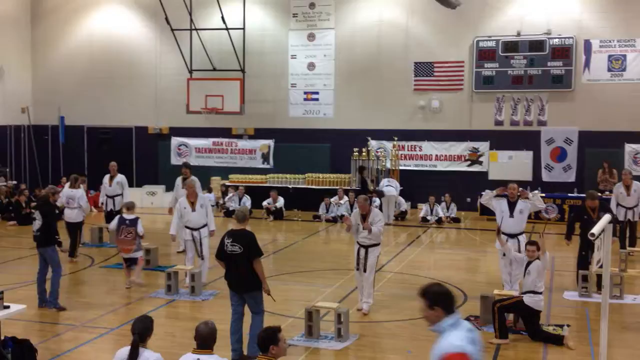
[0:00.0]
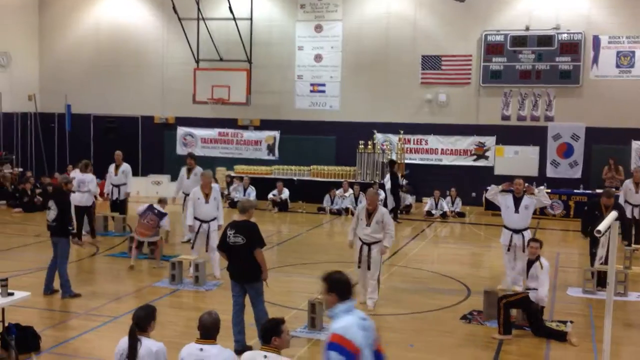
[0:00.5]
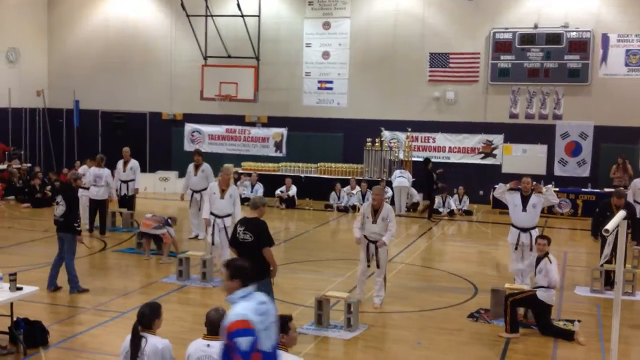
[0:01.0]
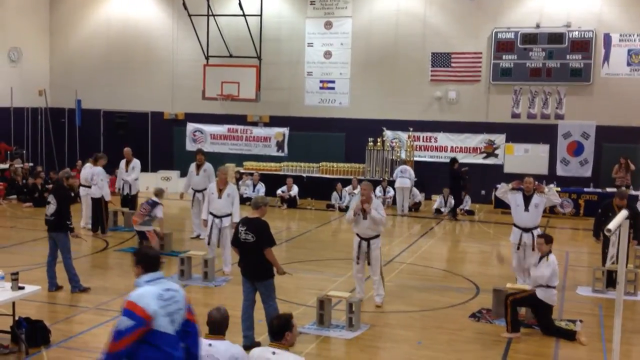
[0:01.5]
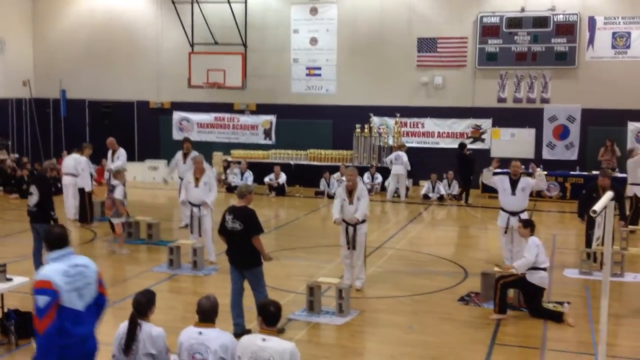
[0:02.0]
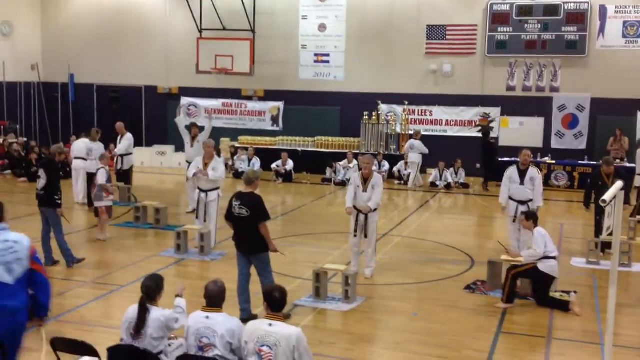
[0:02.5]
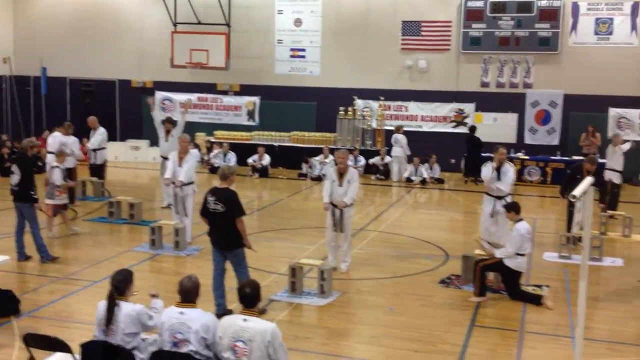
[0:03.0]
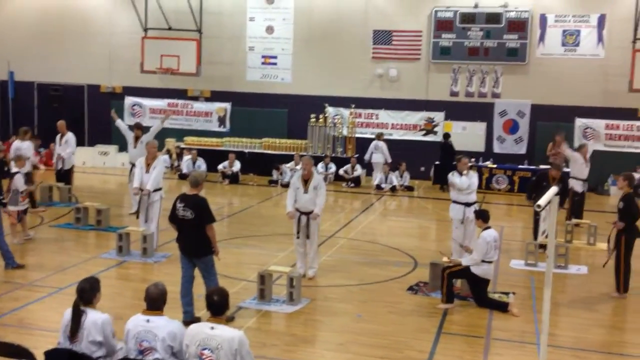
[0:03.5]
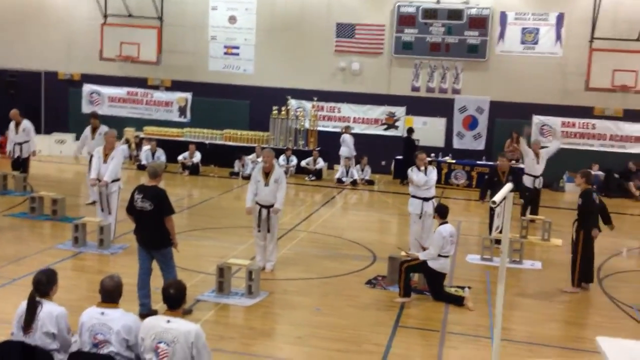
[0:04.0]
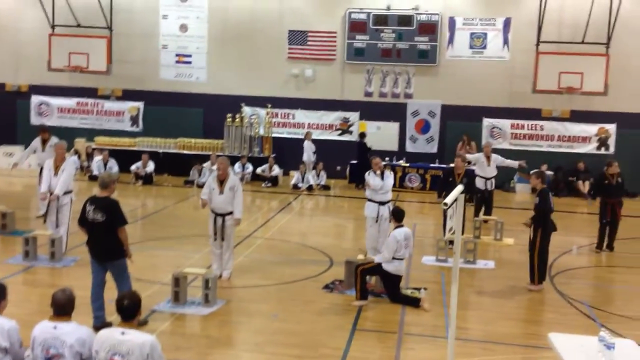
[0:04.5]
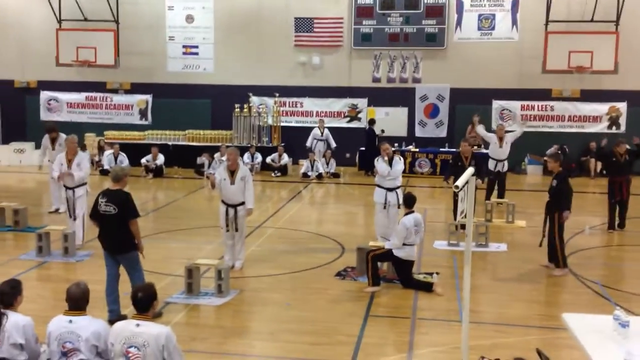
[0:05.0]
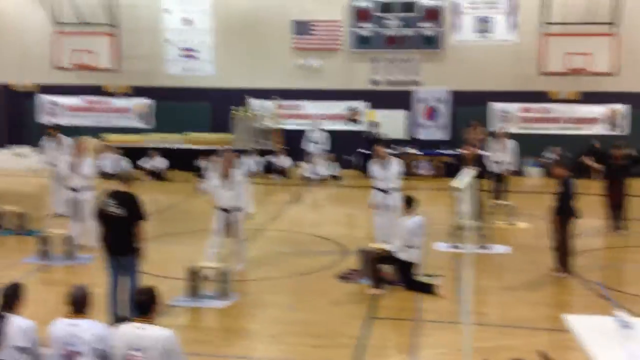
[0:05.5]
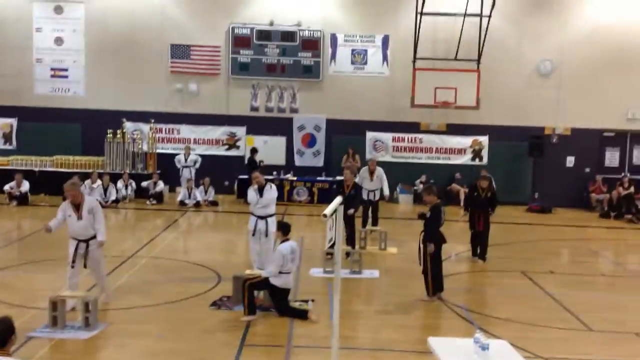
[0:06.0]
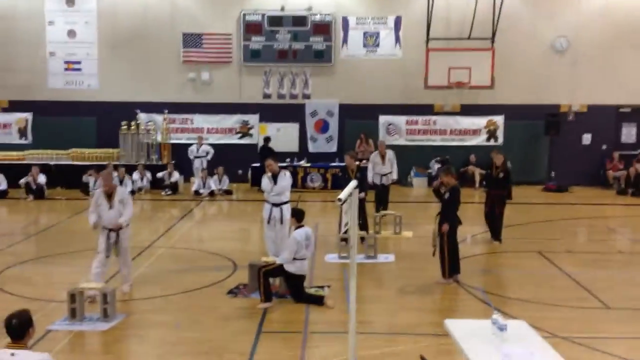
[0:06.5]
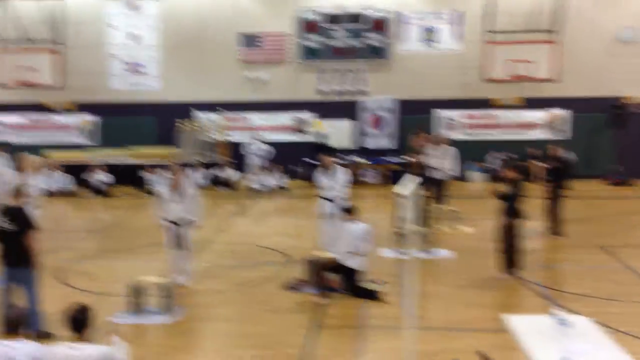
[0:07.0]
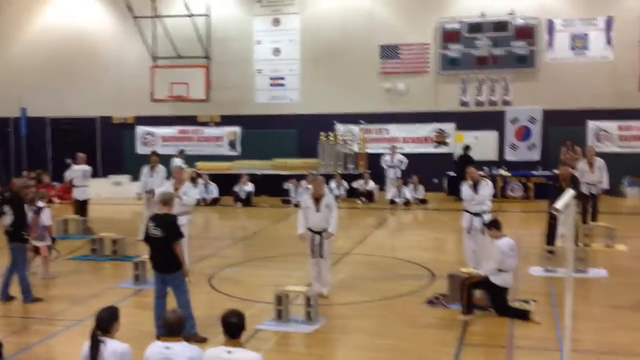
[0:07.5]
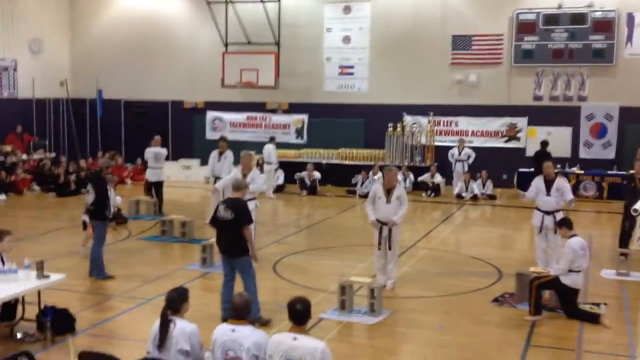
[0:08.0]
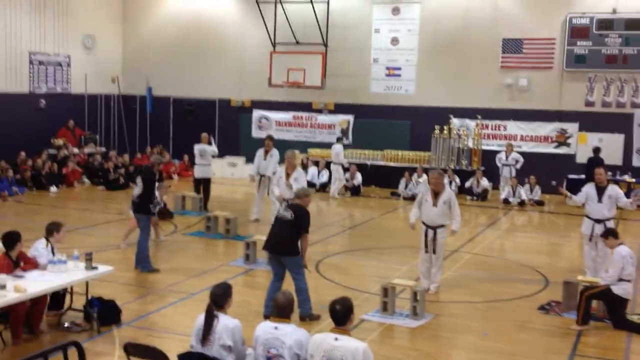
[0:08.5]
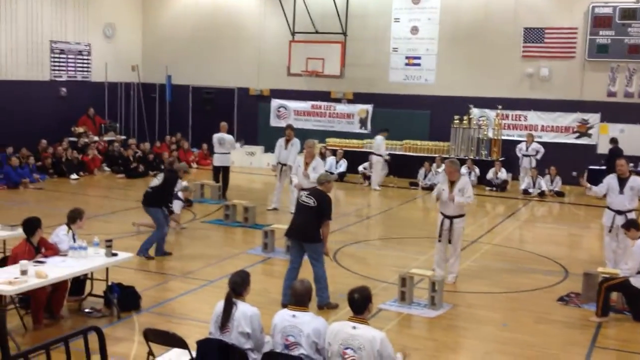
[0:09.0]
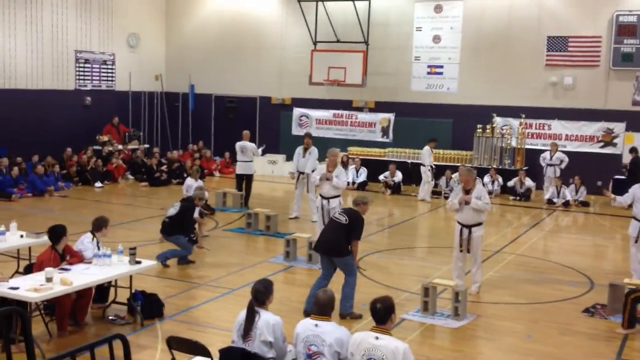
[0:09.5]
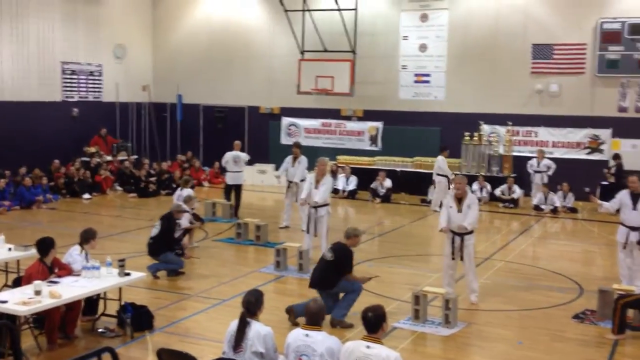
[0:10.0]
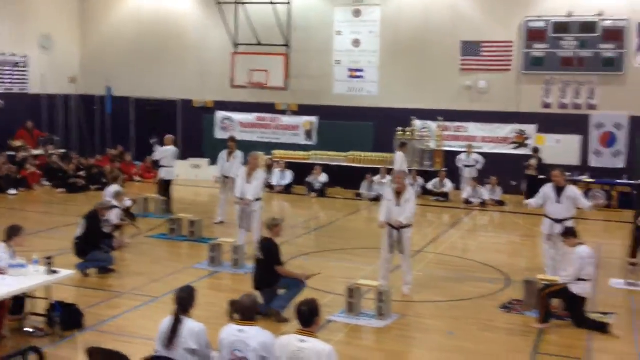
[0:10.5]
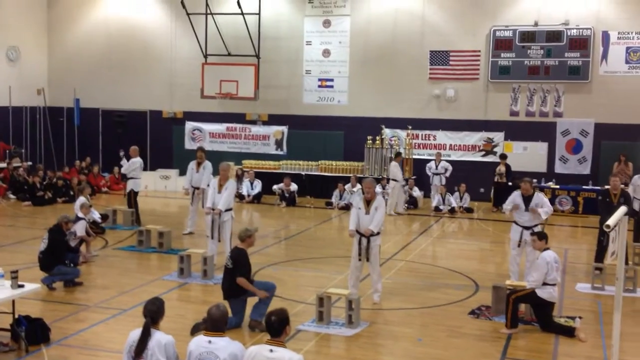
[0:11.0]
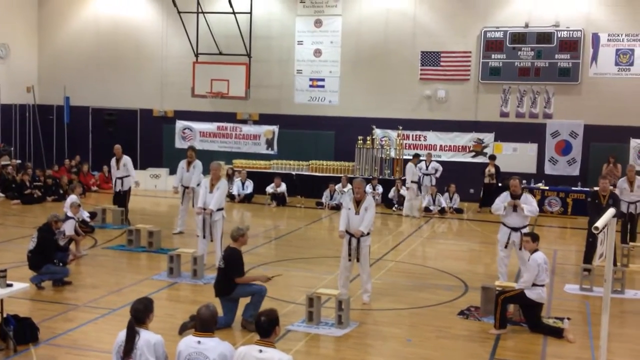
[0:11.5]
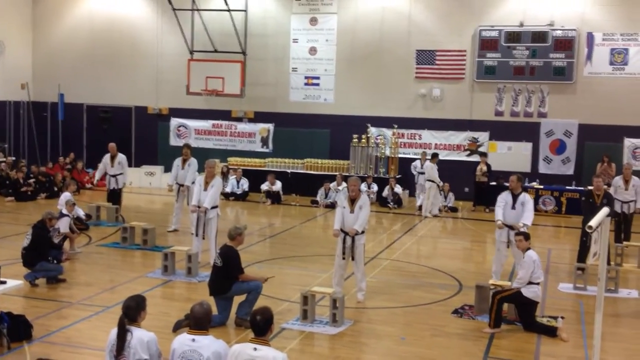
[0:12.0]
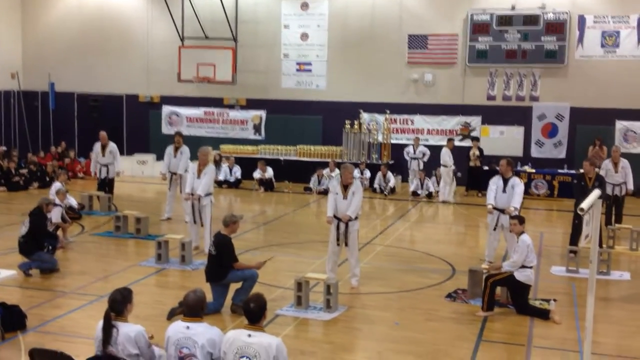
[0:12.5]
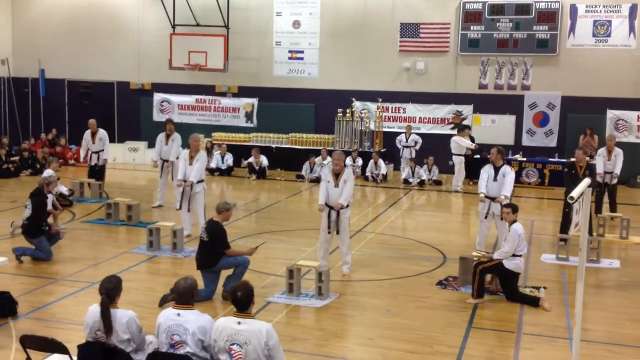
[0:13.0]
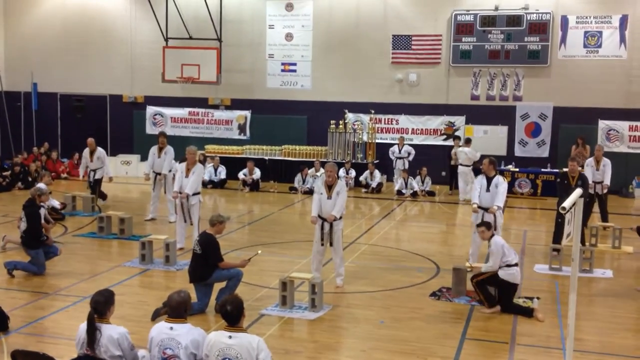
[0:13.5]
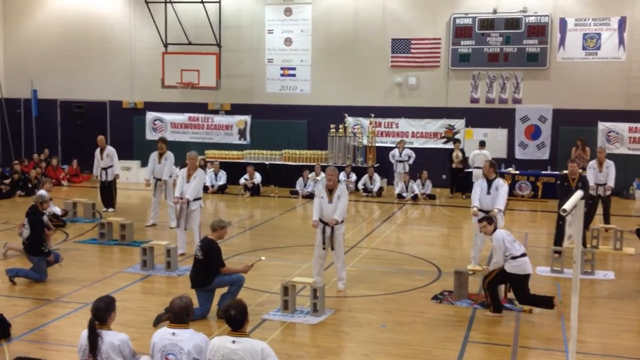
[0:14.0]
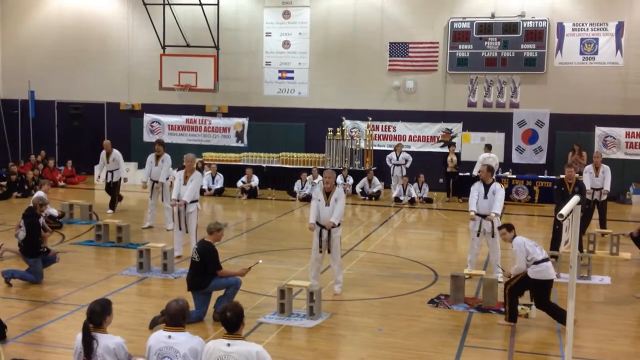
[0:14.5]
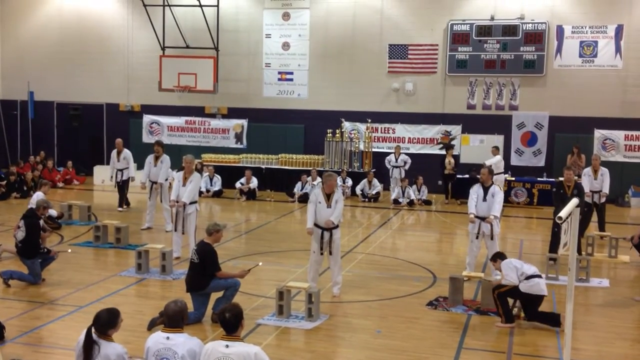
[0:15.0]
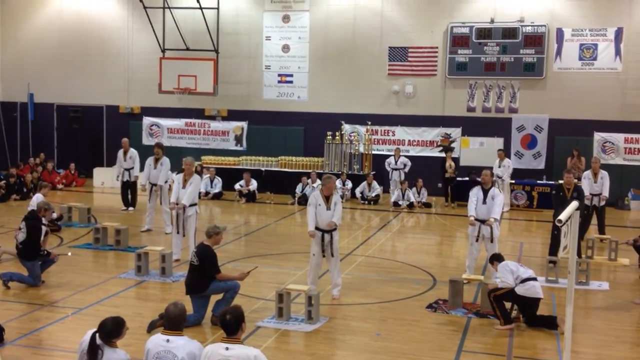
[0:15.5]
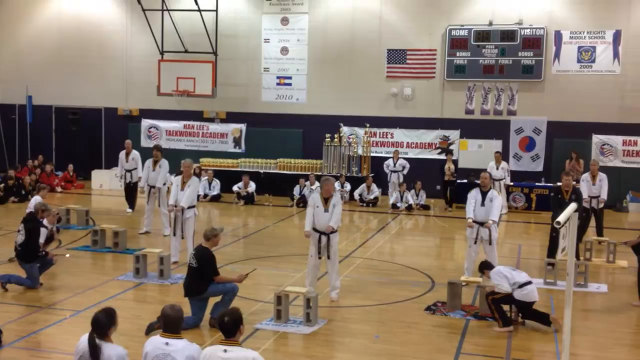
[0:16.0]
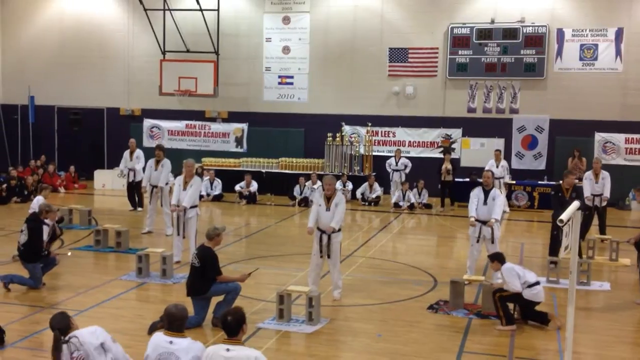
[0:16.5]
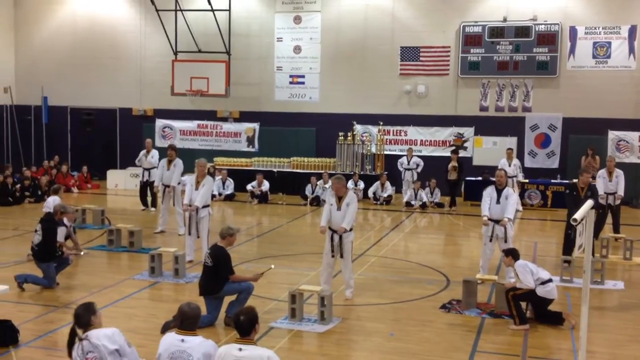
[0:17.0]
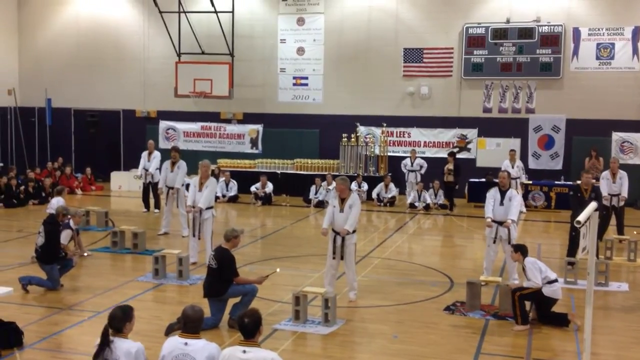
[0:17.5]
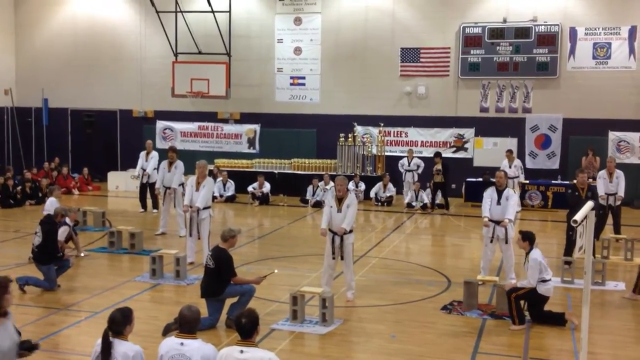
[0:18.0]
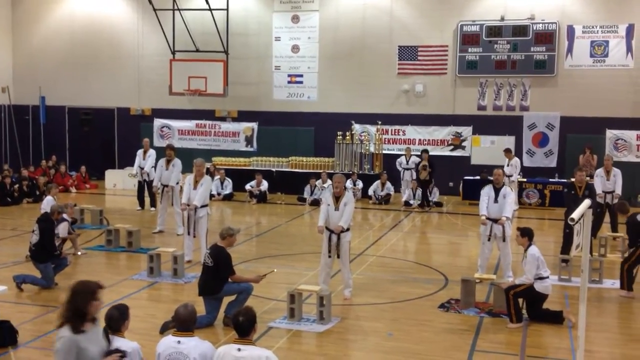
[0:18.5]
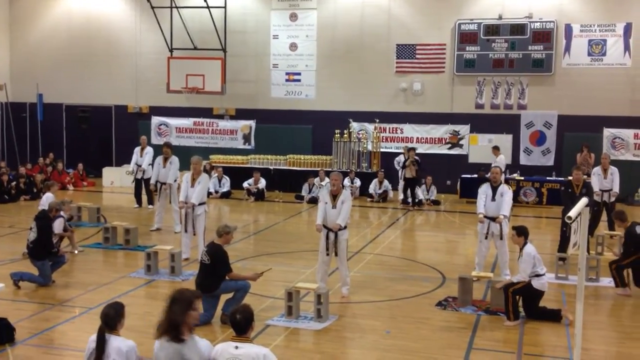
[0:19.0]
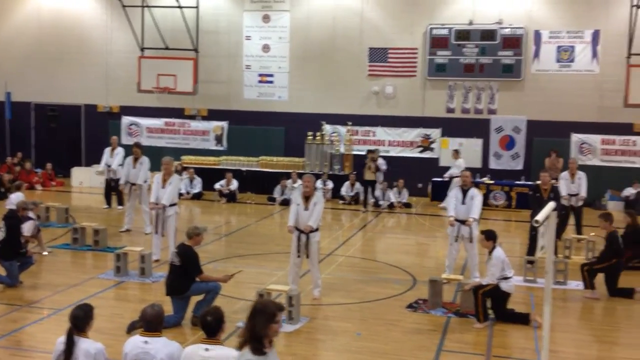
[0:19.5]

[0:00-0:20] The scene is a taekwondo academy inside a gym that looks like a basketball gym. Signs all over the place read "Taekwondo Academy," one reading "Han Lee's Taekwondo Academy," and Japanese and American flags hang up. A group of people wear white taekwondo uniforms with black belts, while some others are not in official garb. They are kind of stretching, moving their arms around, prepping and taking position. In front of them are bricks with wood slabs, so it looks like they are going to try to chop the brick; they stand in position with both hands out, focused on the bricks. People in regular clothes kneel, kind of in front of them by the bricks and wood, apparently watching. A kid in a white t-shirt and a jersey walks around, helping to place something down and set up. Everyone is kind of taking position, and people are visible at tables.